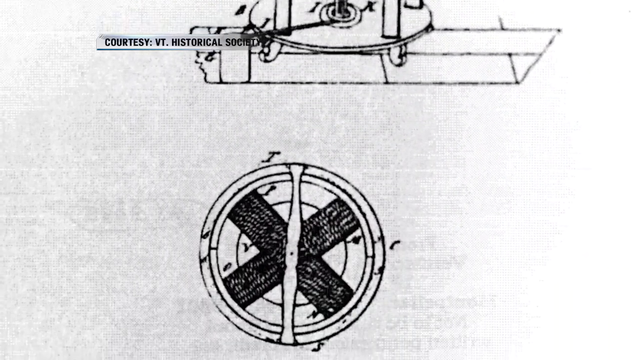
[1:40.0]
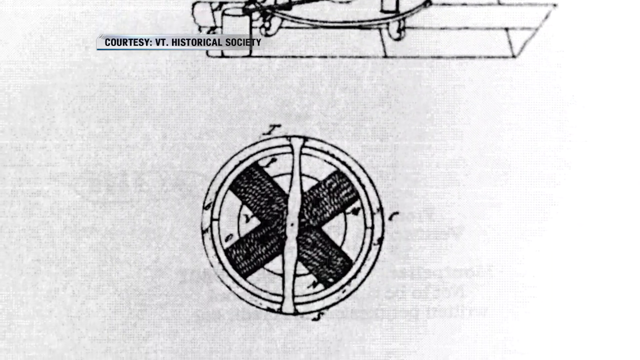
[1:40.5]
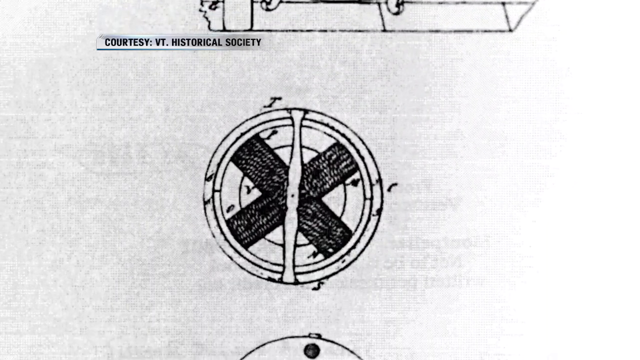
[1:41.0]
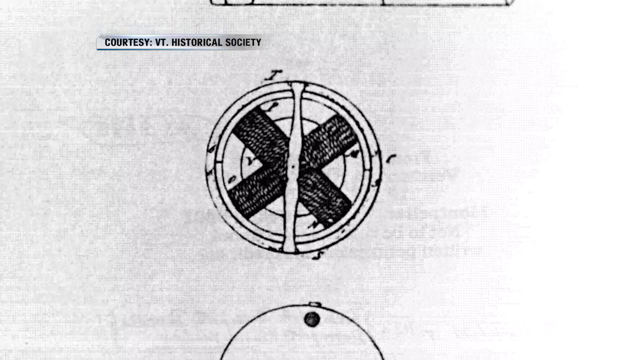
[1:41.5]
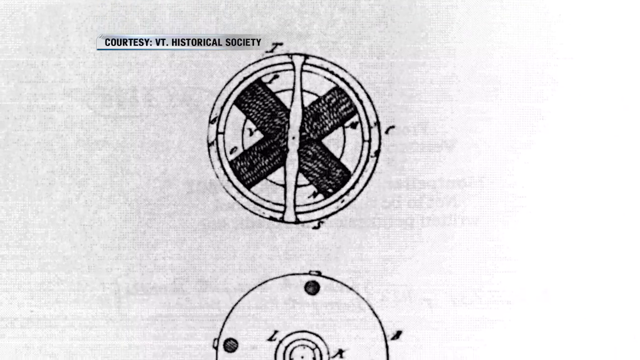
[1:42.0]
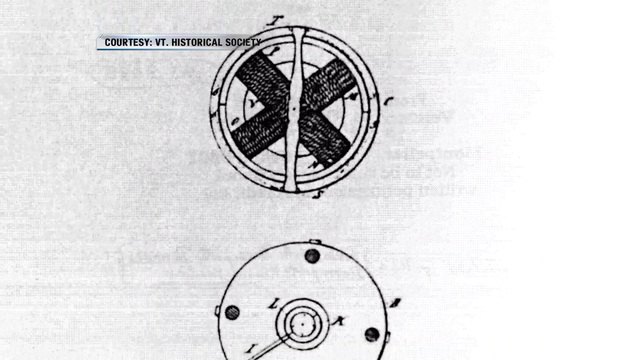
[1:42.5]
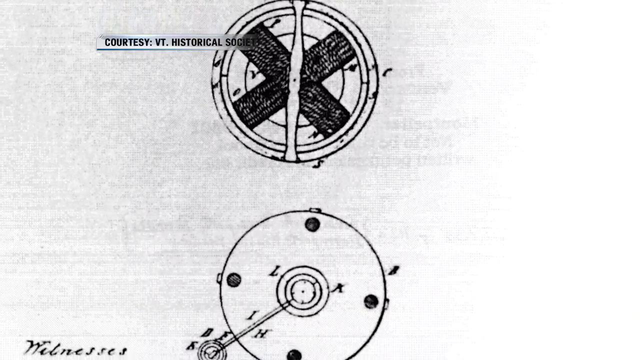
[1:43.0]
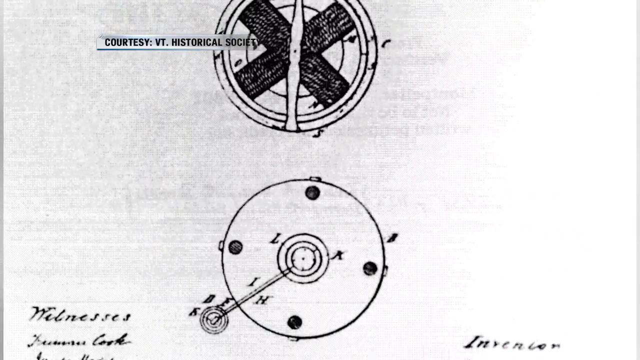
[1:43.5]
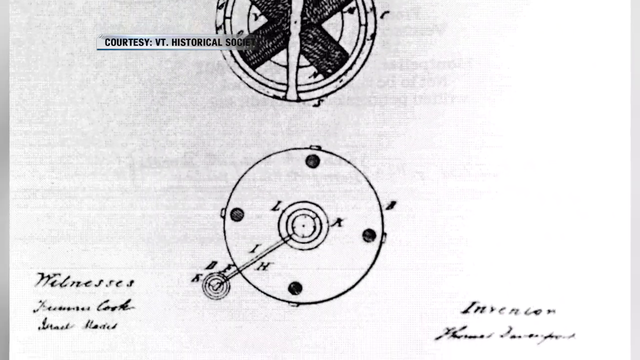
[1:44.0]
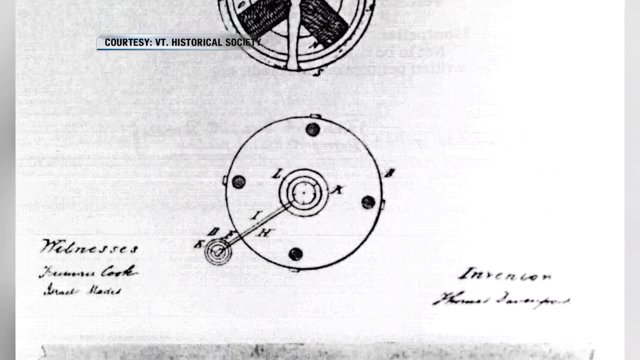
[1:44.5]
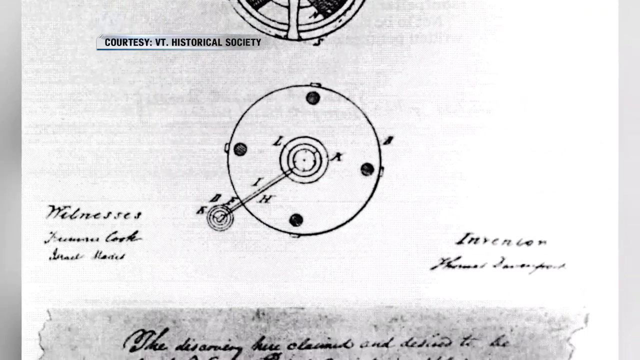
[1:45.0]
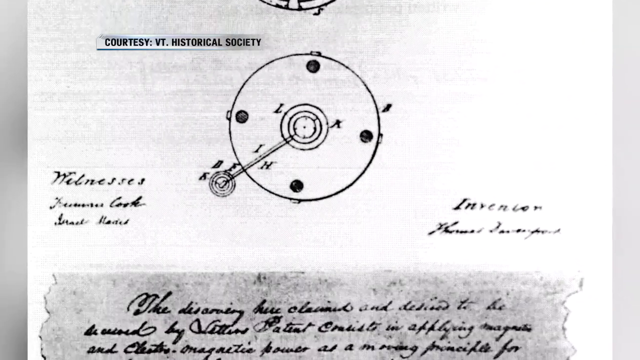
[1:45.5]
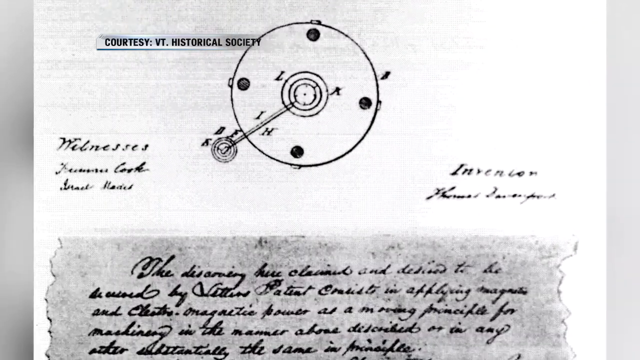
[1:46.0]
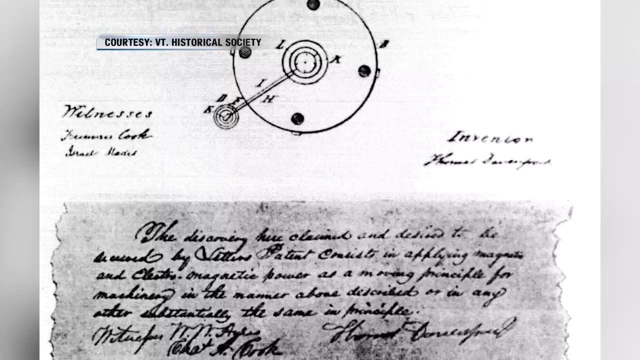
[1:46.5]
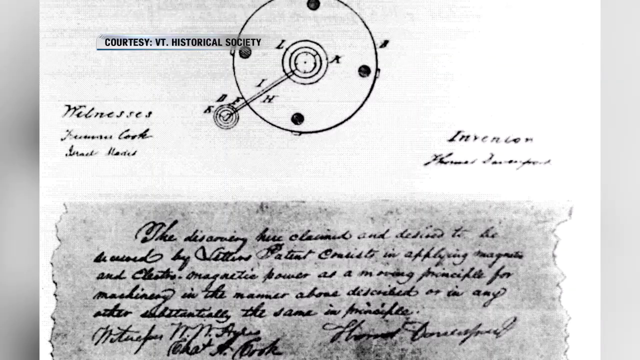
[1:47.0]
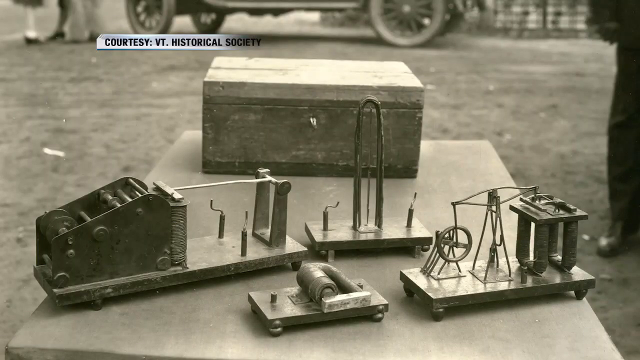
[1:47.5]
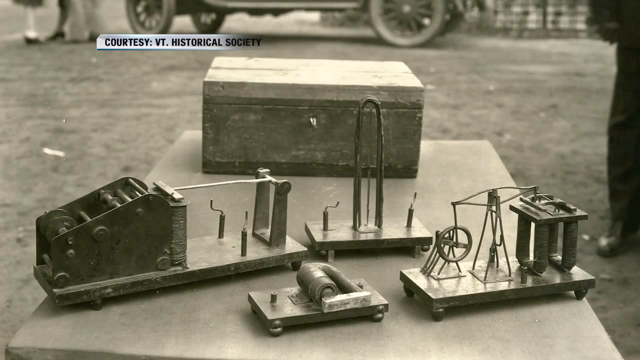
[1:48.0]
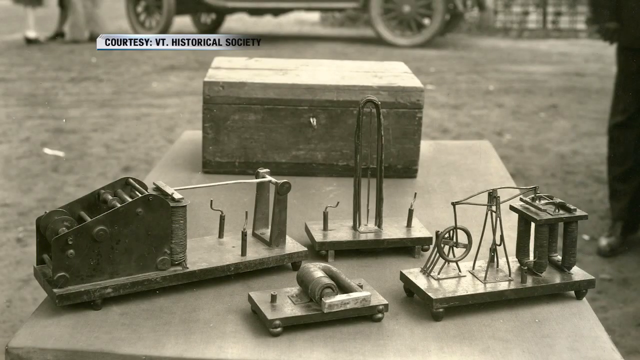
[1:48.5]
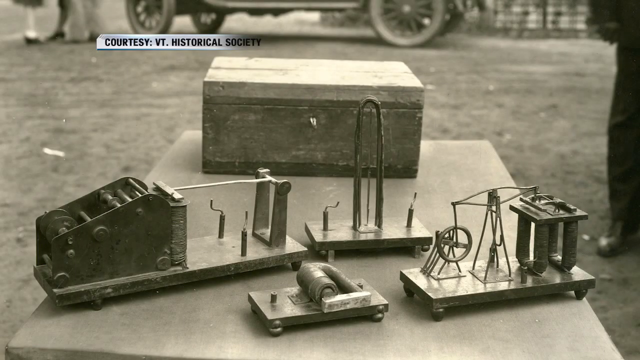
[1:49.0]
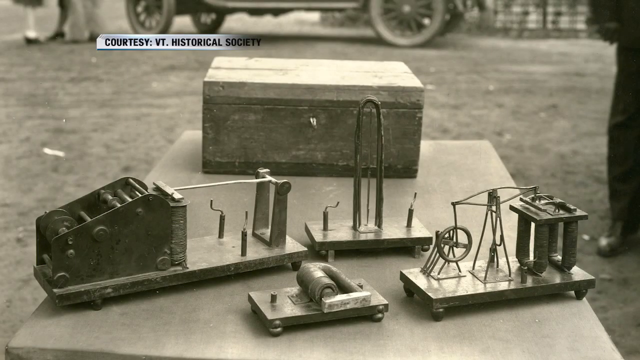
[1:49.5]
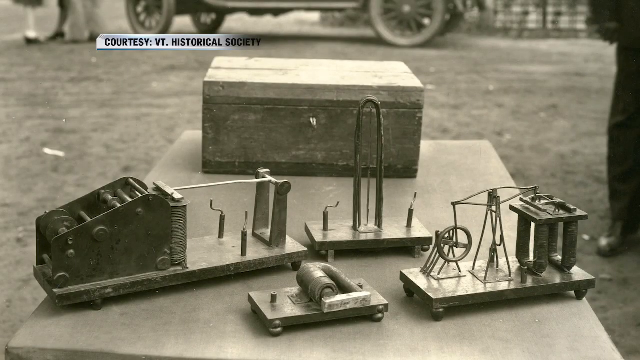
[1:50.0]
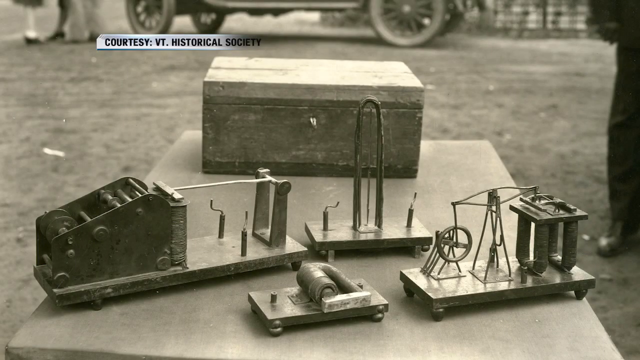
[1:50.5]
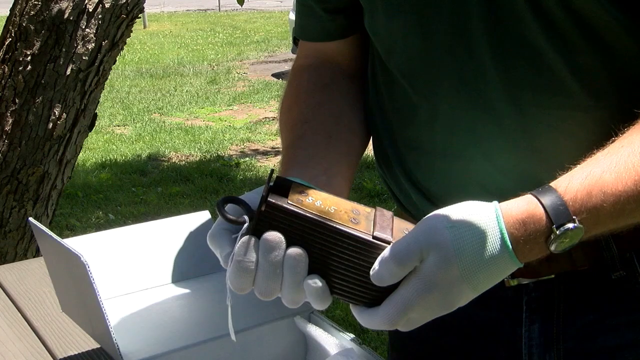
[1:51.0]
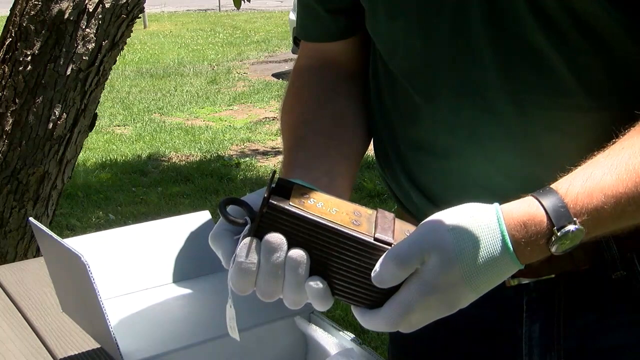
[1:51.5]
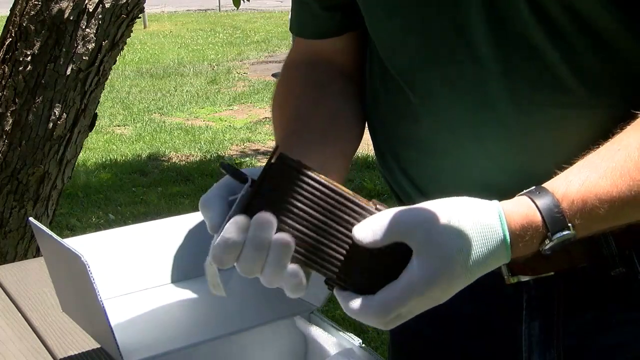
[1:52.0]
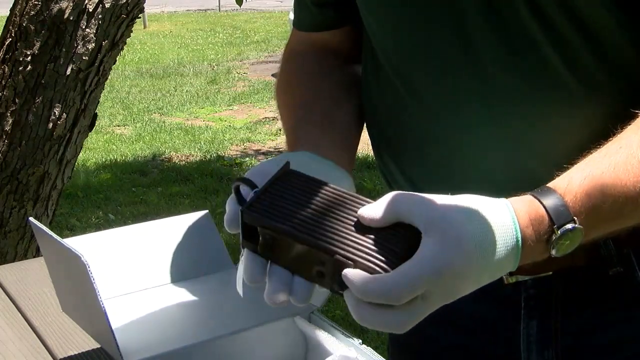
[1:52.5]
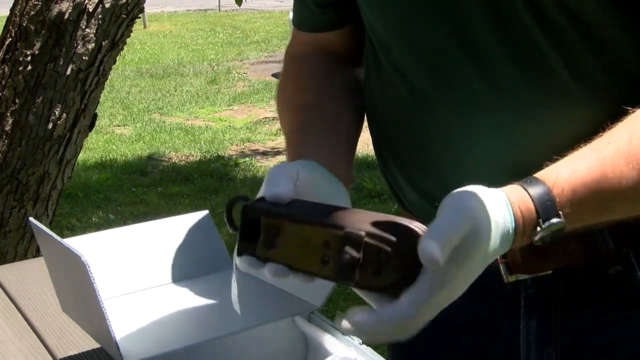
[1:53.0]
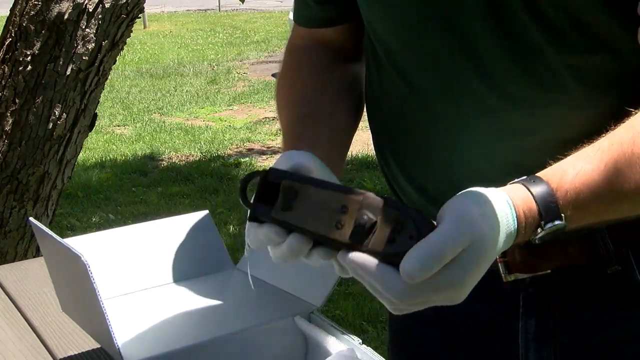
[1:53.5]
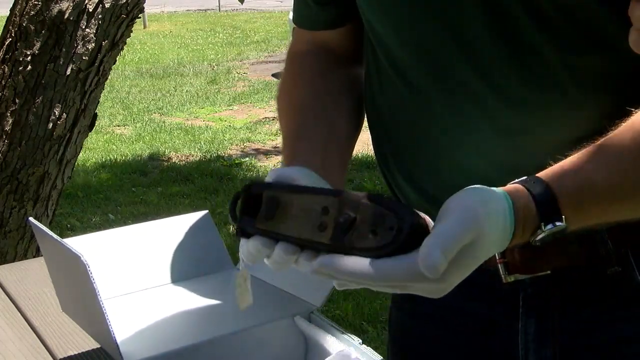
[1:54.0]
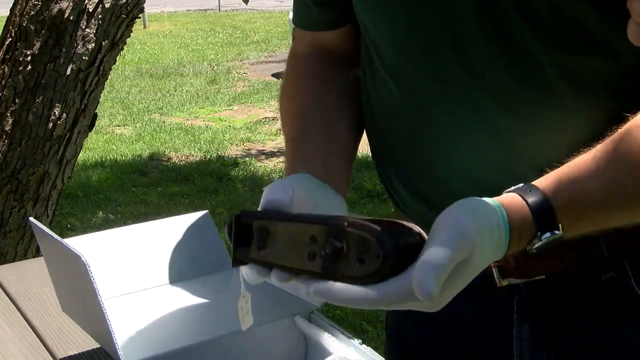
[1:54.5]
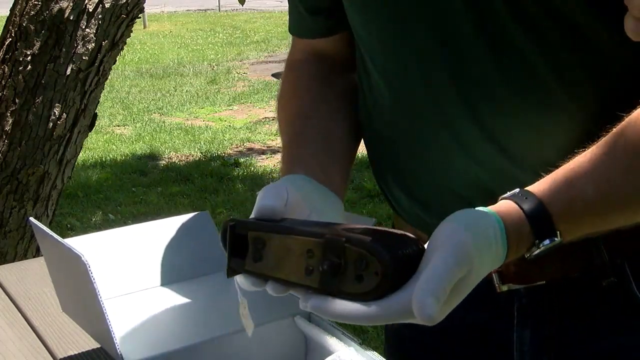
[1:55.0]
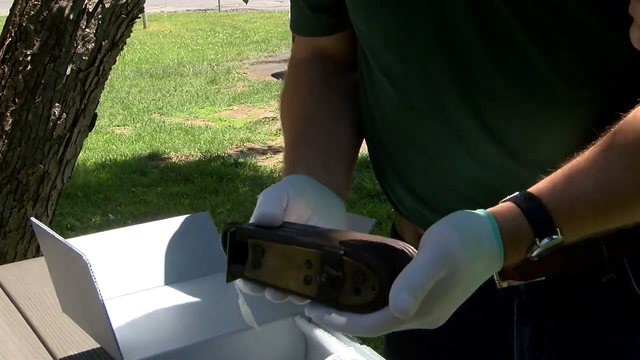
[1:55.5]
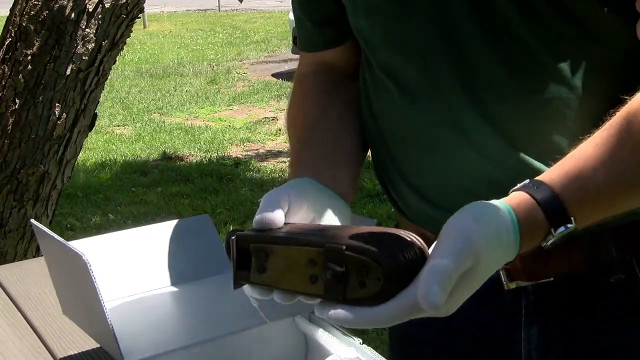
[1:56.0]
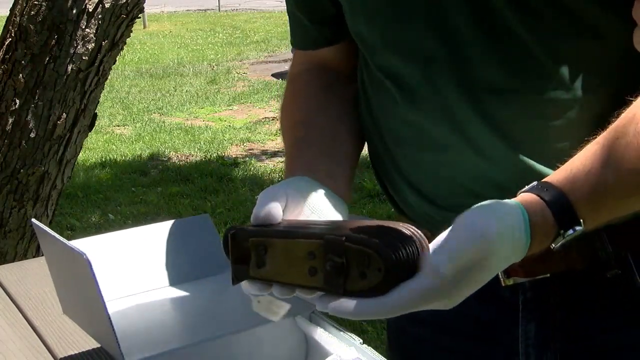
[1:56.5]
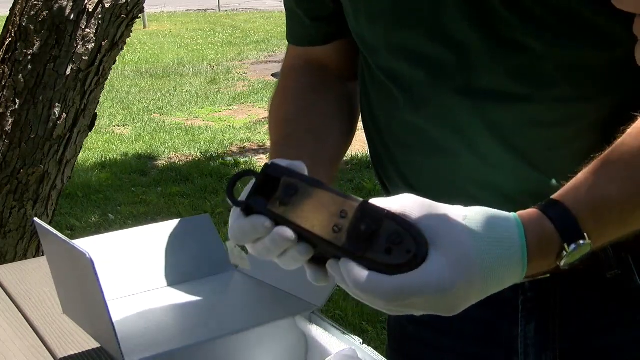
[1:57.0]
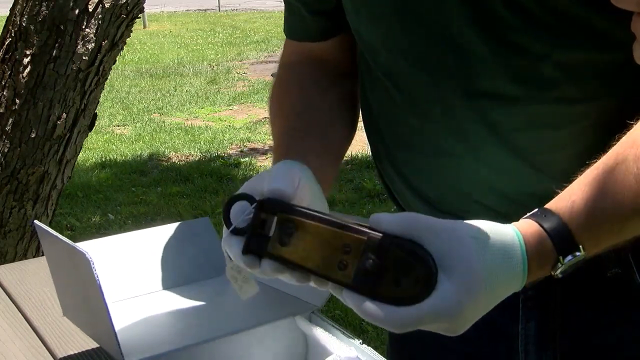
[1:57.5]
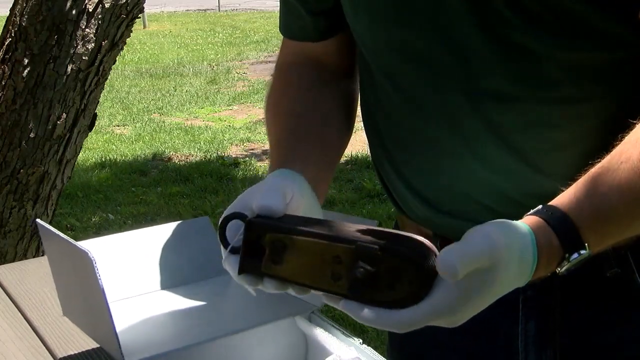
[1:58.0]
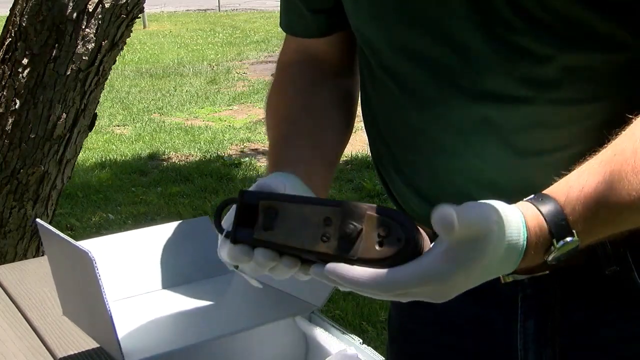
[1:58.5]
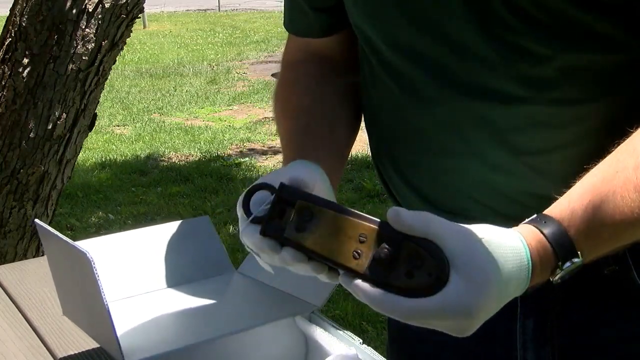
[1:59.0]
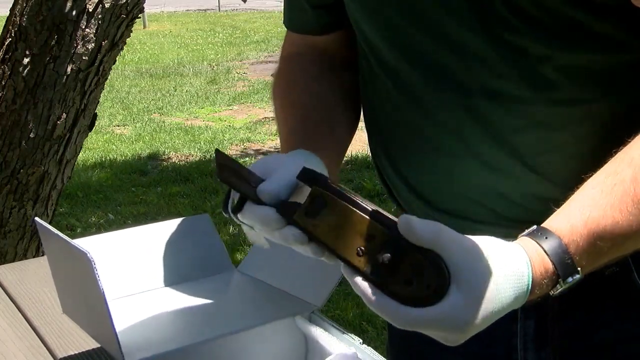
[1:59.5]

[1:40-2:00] What looks like a diagram shows a fan and a circle with four holes in it, with some writing underneath. The video then shows an old black-and-white photograph of a lot of metal sitting on a table, with a lot of kind of concoctions. It cuts to a man wearing rubber gloves holding an old piece of equipment that kind of looks like it is made of bronze and metal, moving it around in his hands. The video goes back to other images that look like many electrical wires wrapped around metal, possibly magnets, apparently showing what parts of a motor used to look like.